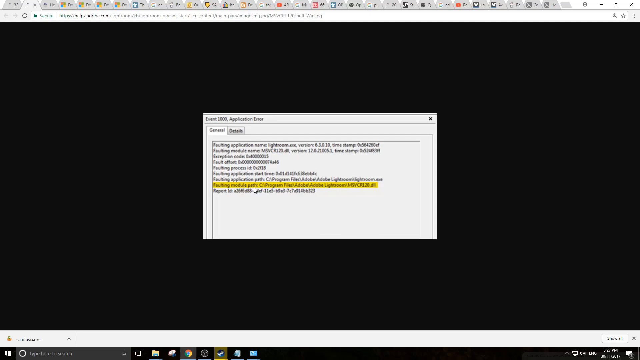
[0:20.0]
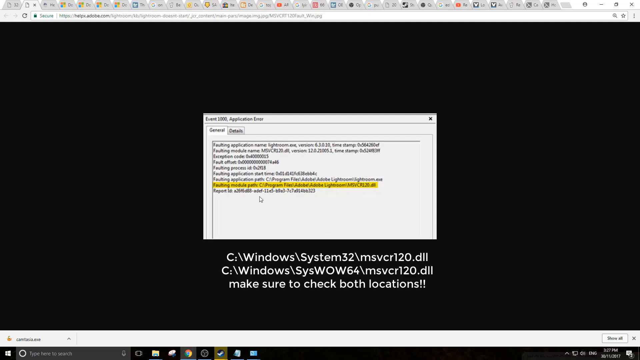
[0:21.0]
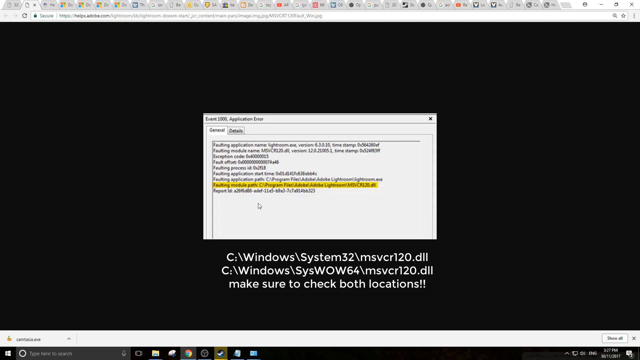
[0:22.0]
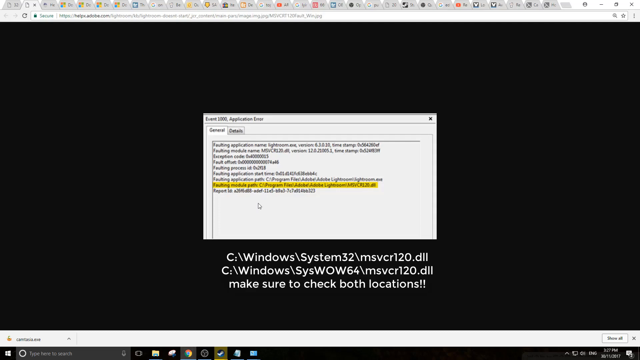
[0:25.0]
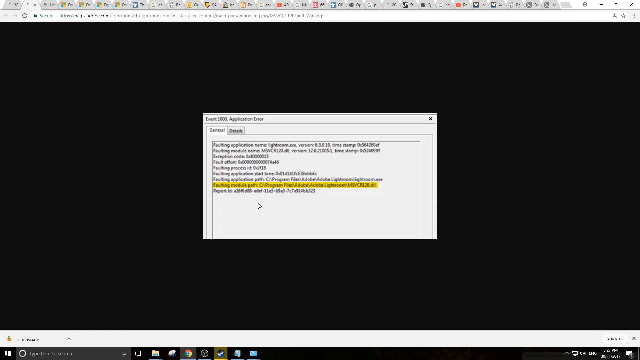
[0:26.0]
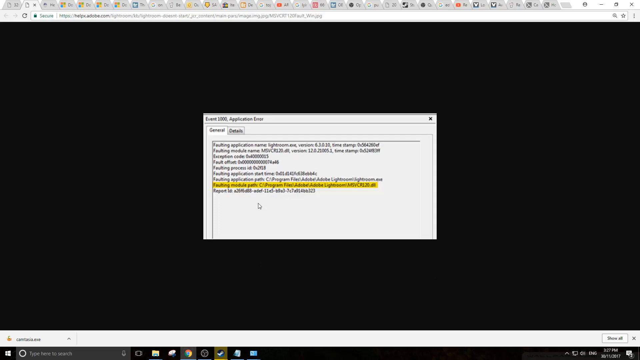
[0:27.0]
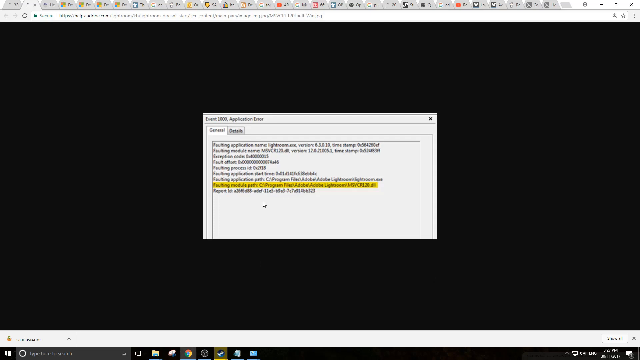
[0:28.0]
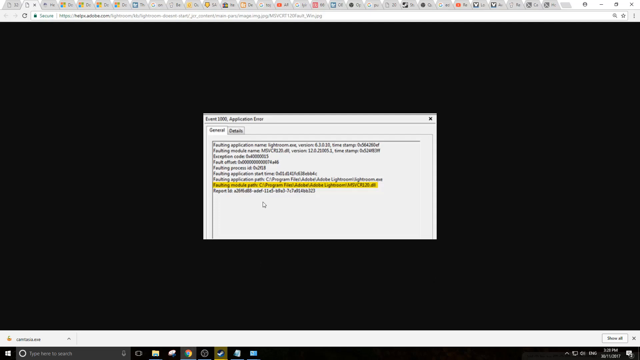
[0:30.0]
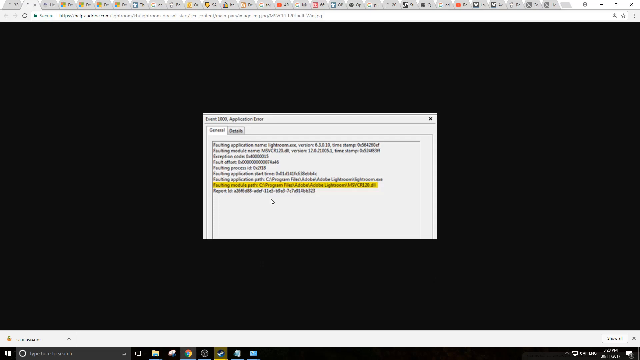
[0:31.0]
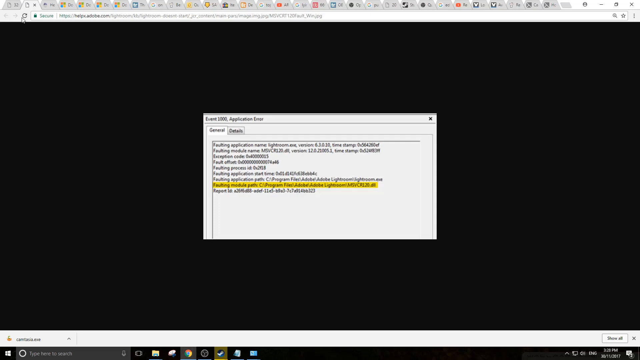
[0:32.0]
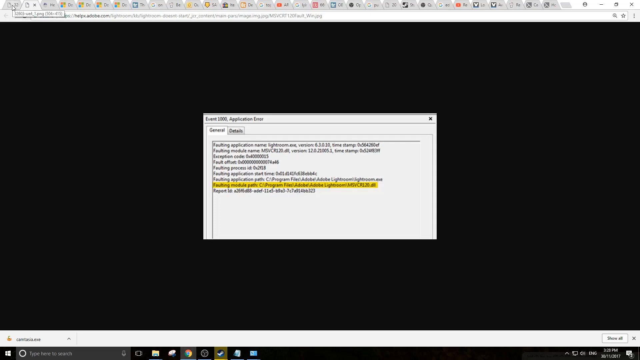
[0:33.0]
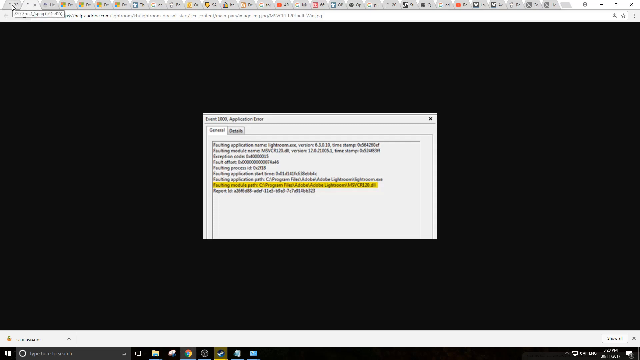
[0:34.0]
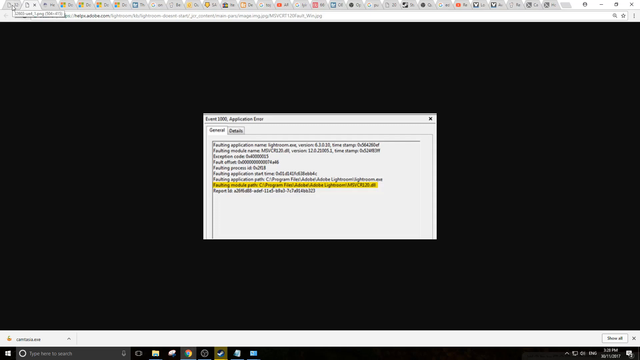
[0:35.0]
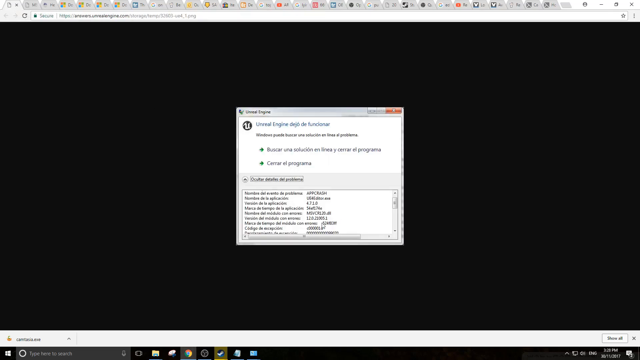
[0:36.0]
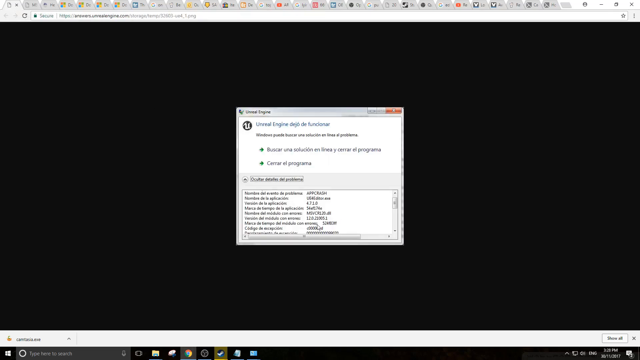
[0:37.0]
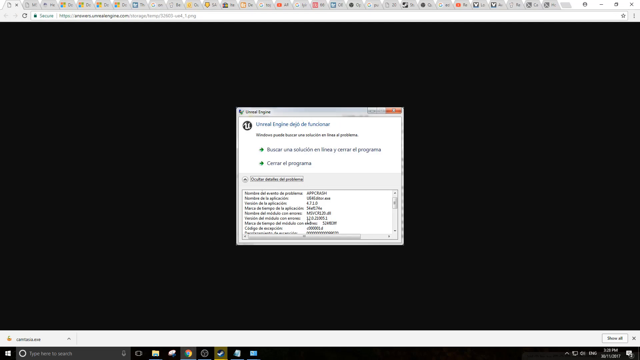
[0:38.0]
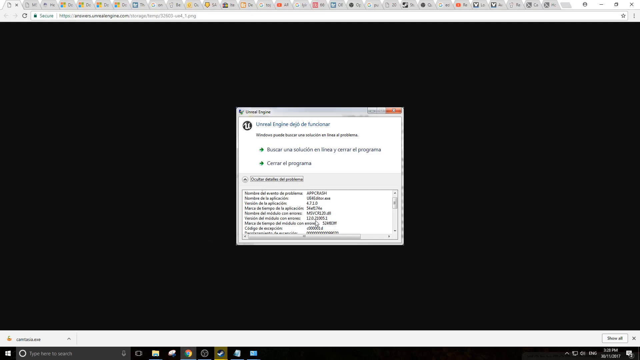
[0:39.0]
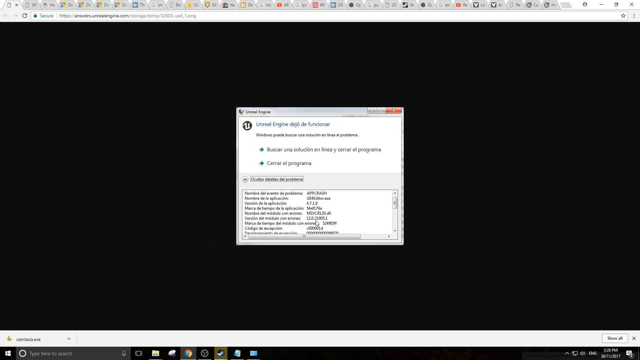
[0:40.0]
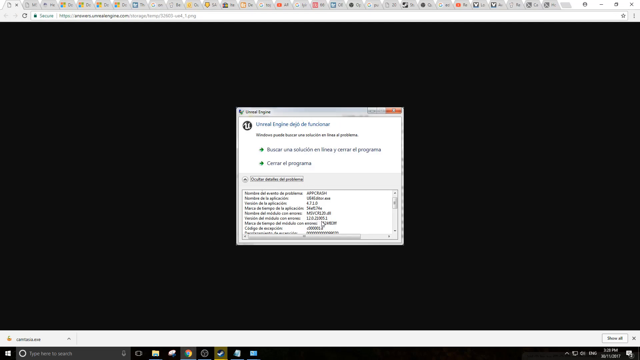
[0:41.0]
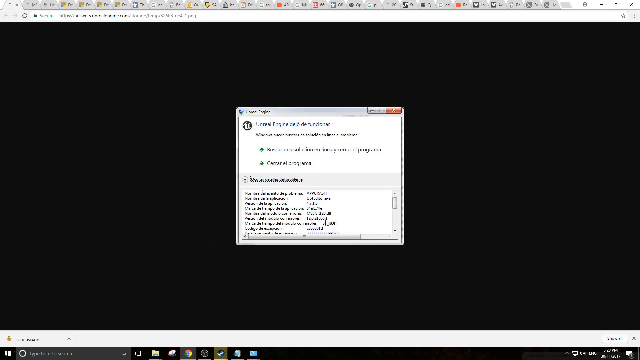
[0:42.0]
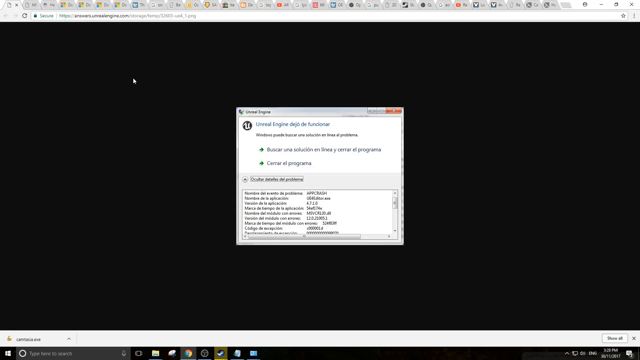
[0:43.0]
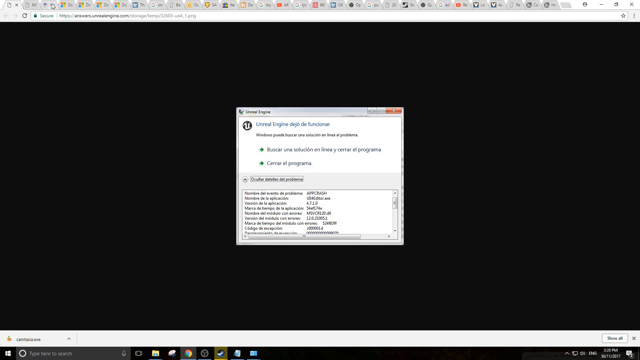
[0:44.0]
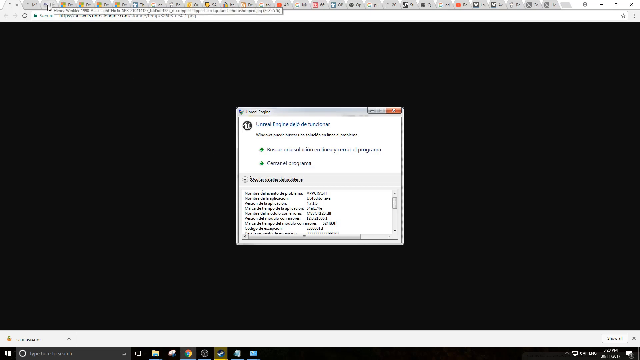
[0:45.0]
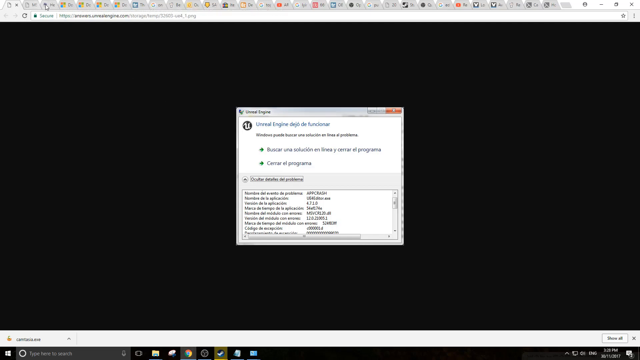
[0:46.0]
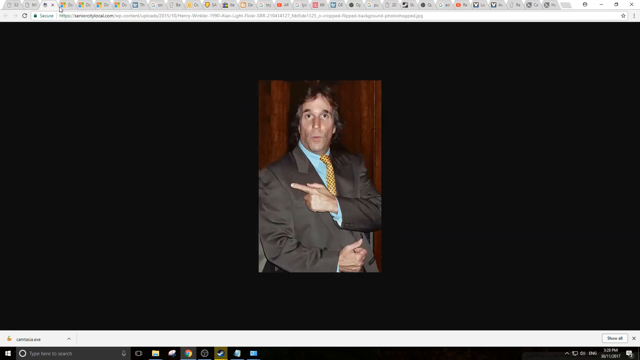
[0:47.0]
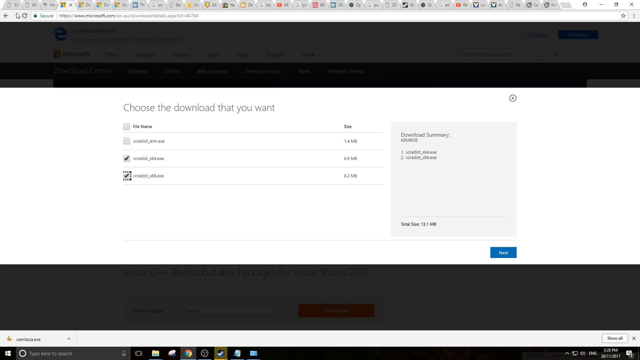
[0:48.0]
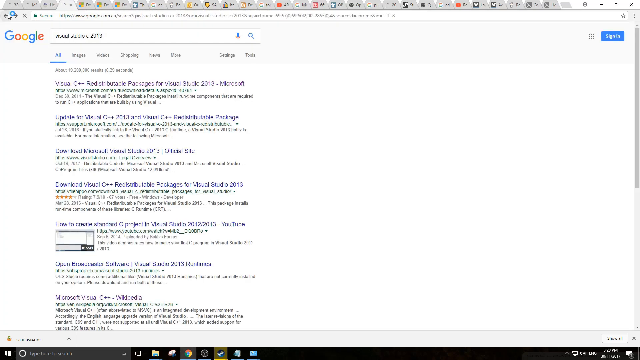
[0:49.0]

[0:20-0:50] An application error box is on the screen: a white box on a black background, with the fault application text written in black and the faulting module path highlighted in yellow. It looks like a demonstration, as there is text below with a file link that says "make sure to check both locations"; it appears to be a training document showing how to look for or correct these errors. The subtitles then disappear while the application error box remains. A different box comes up giving options to look for a solution or close the program, with information below about the error or the software version. A mouse hovers over some of the text, as though the person is recording their screen. A picture of a man then appears on screen. He wears a grey suit, a blue shirt and a yellow patterned tie. His left arm is diagonal across his chest with his index finger pointing toward his shoulder, his right arm is lower down by his waist, and he looks directly at the camera. Once the man disappears, another image flashes up for just a second, saying "choose the download that you want" with some file names. Another tab then opens, showing a Google search for Visual Studio C 2013.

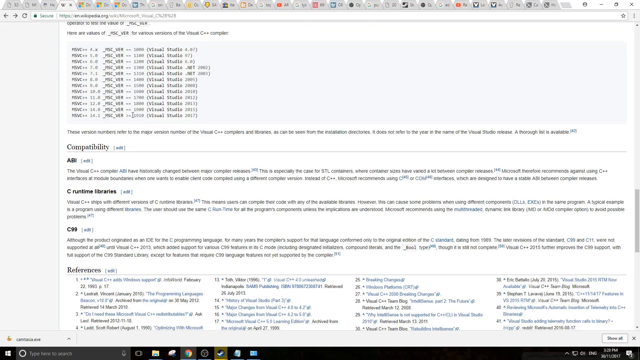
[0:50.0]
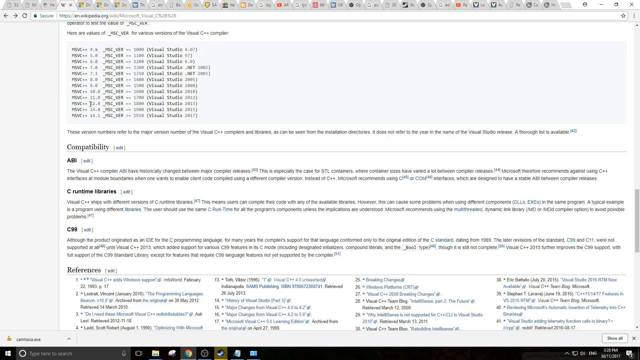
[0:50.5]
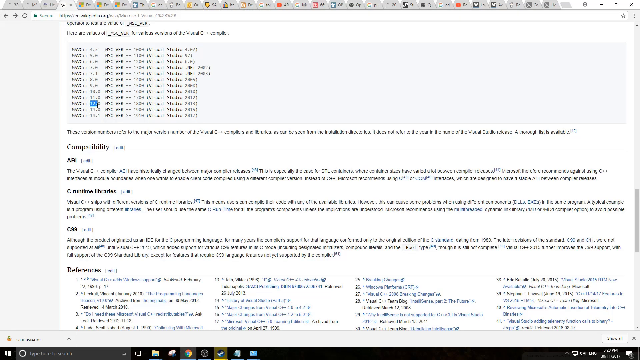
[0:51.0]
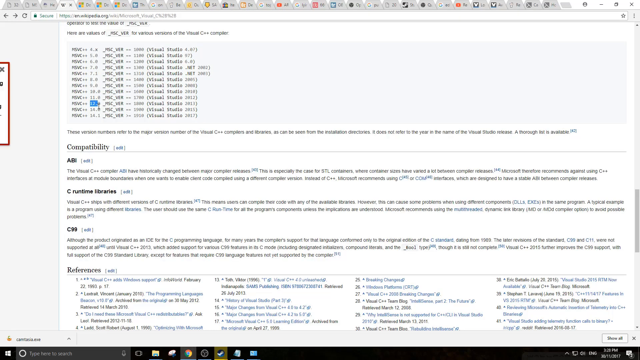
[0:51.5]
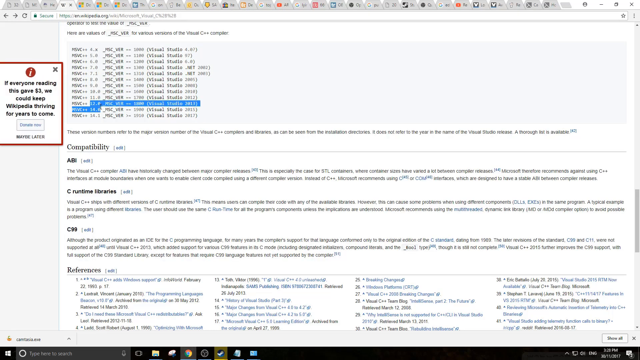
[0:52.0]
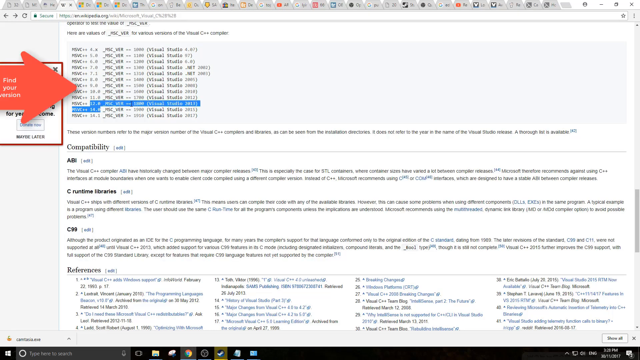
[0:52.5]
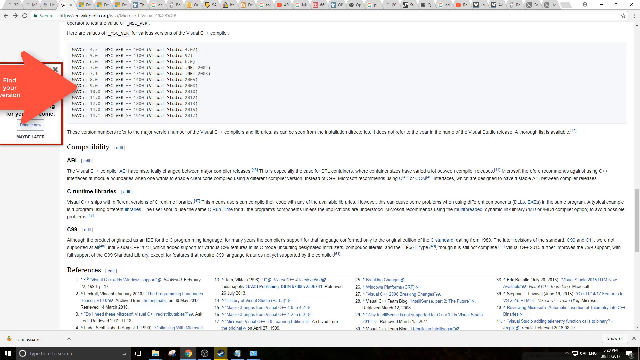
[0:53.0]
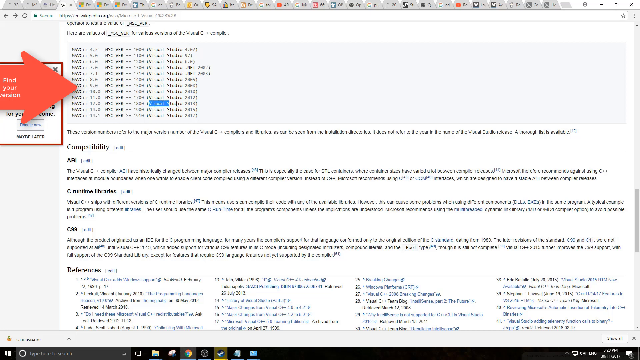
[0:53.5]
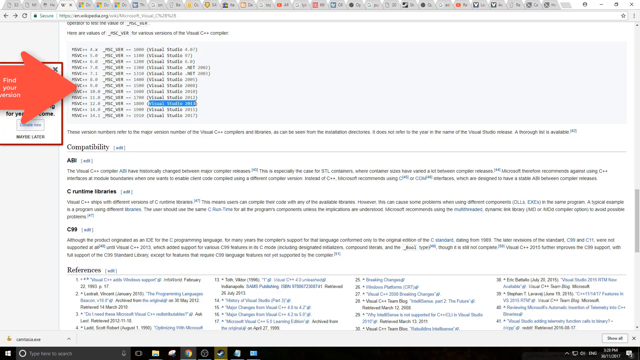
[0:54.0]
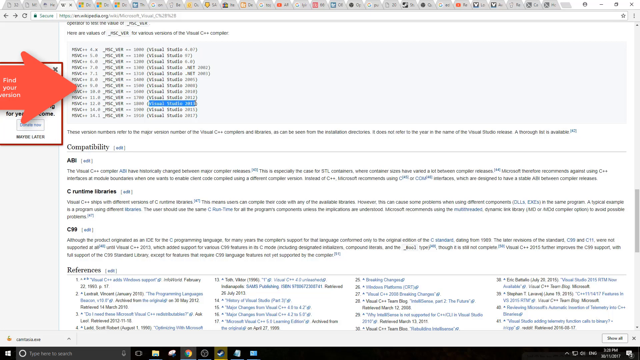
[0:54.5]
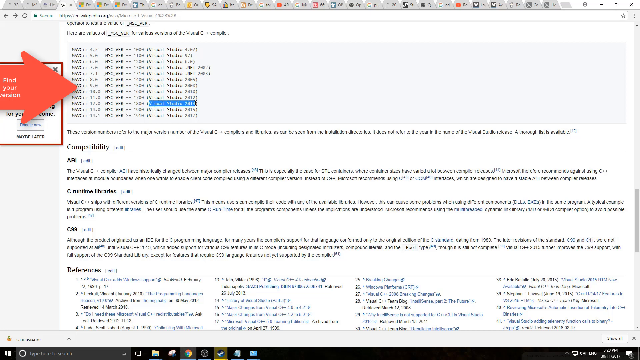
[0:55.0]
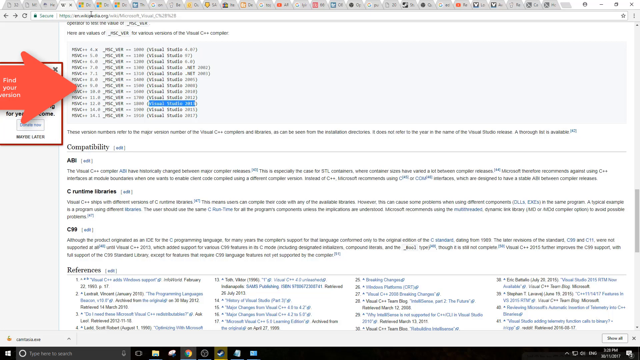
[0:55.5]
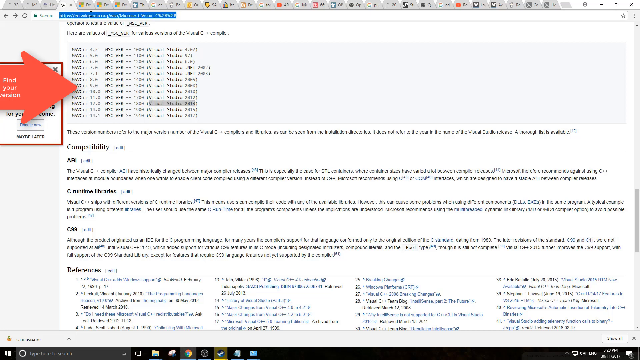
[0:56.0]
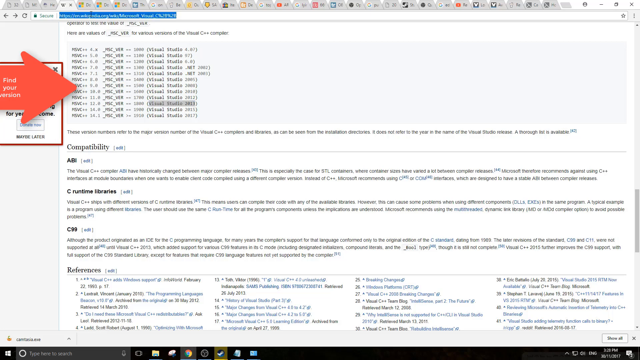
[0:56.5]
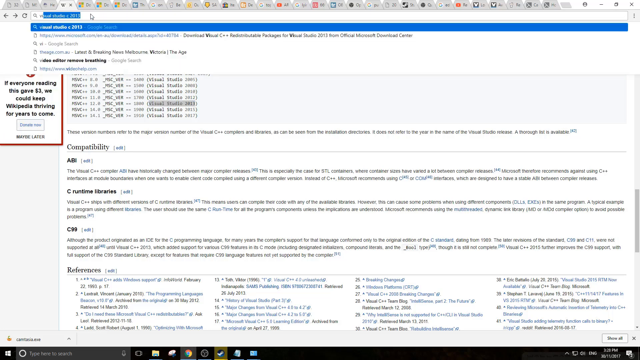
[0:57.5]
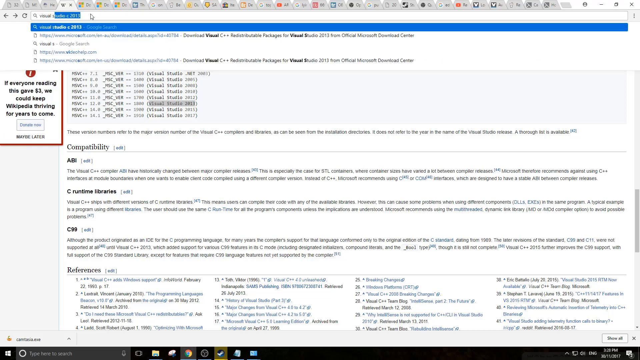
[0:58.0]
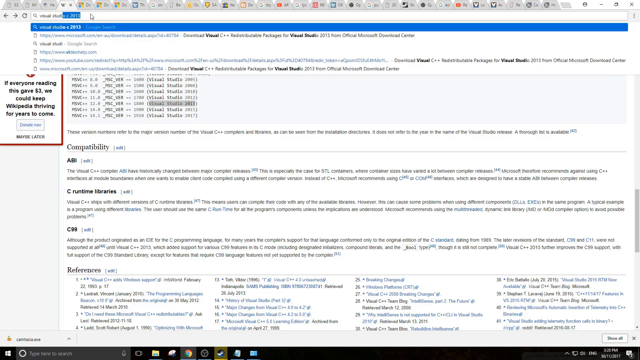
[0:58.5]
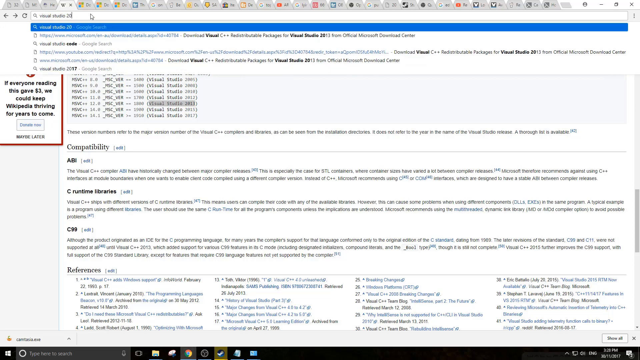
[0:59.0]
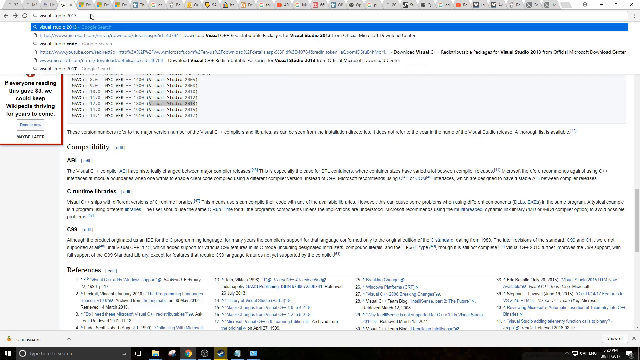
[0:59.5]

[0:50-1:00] A Wikipedia page appears on screen, seemingly about Microsoft Visual C, showing the compatibility and various references for Visual C software. The user highlights a bit of text in blue, then highlights another part of the text. On the left-hand side of the screen a red arrow appears with the words "find your version". Then "Visual Studio 2013" is typed into the web browser at the top of the screen.